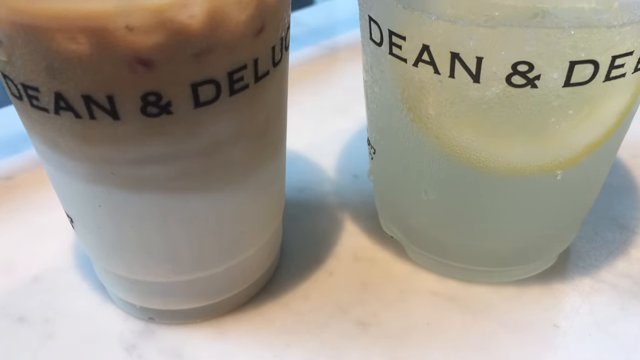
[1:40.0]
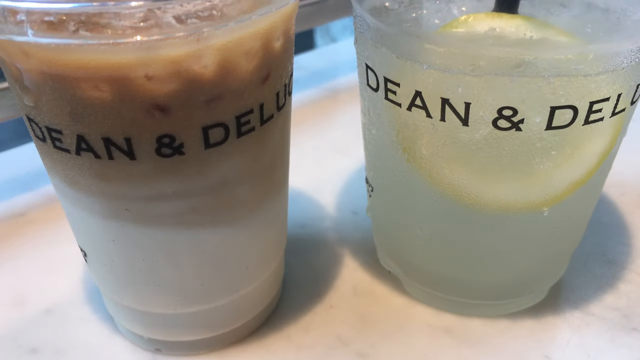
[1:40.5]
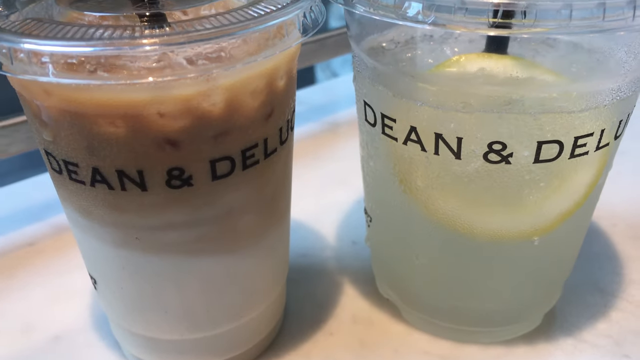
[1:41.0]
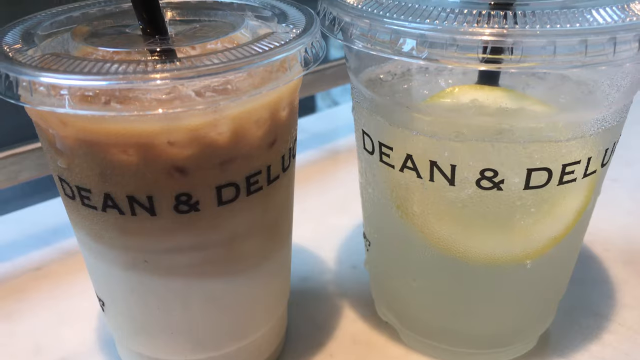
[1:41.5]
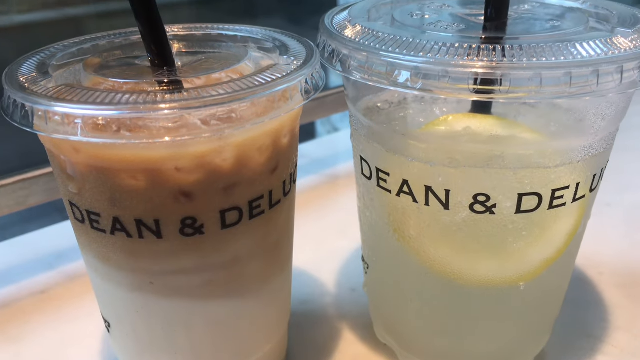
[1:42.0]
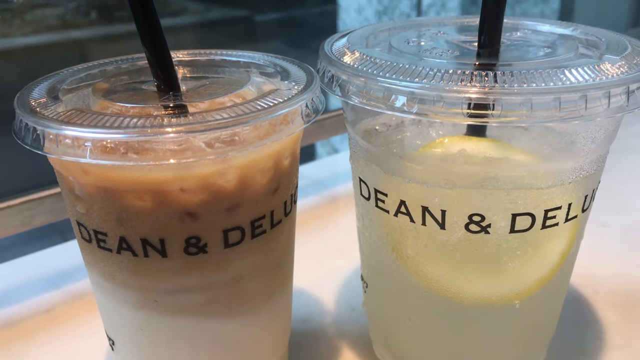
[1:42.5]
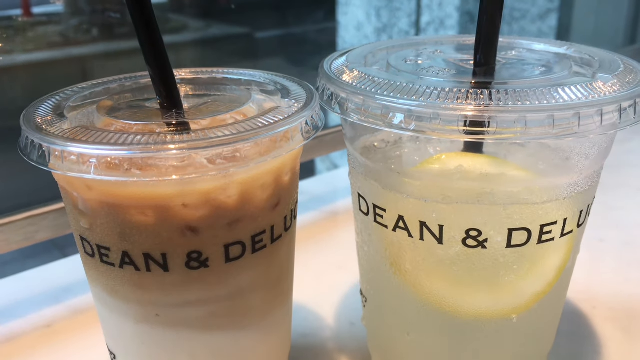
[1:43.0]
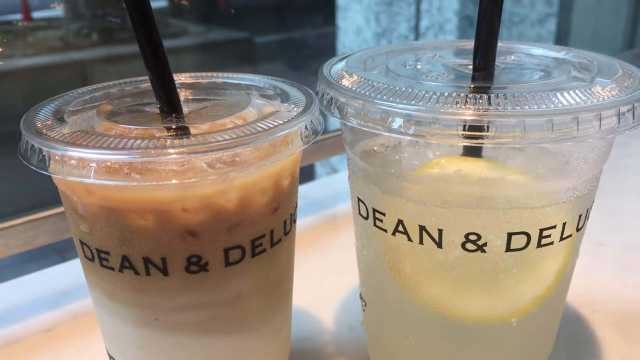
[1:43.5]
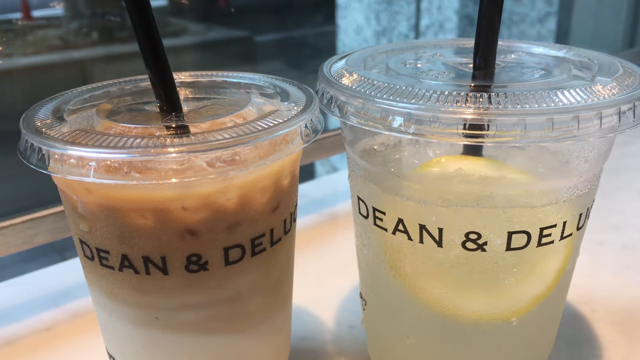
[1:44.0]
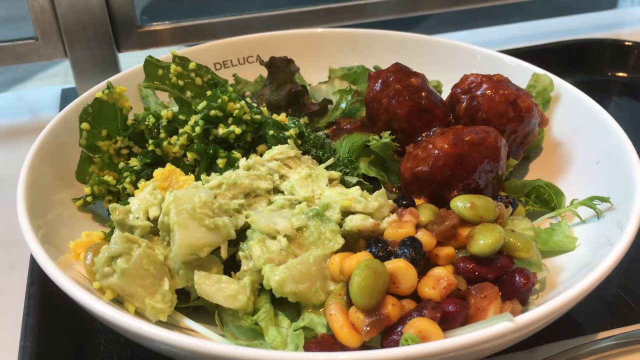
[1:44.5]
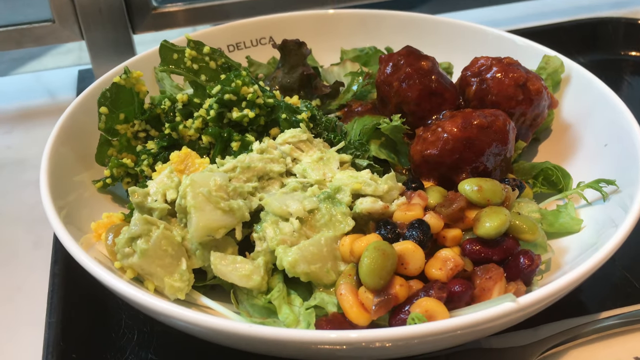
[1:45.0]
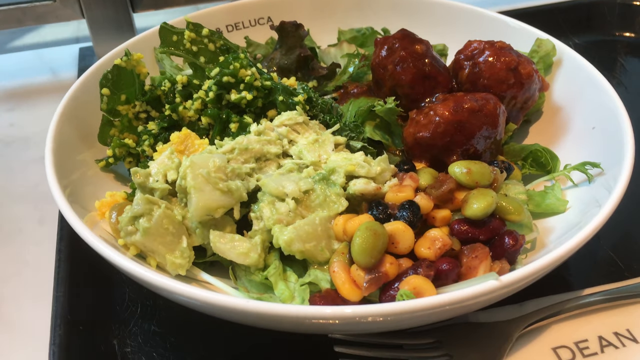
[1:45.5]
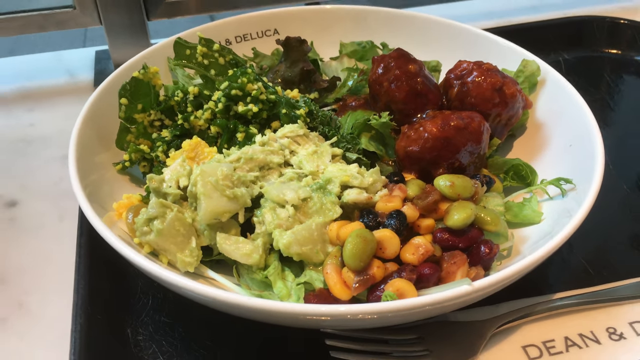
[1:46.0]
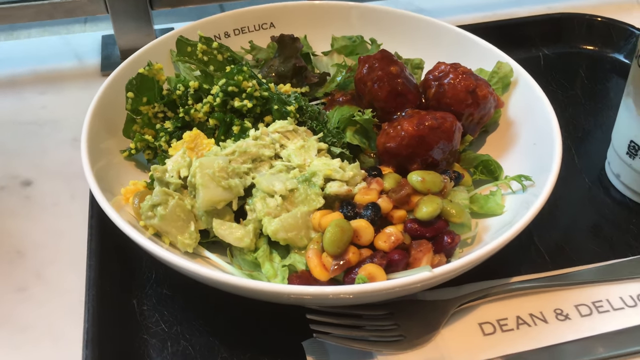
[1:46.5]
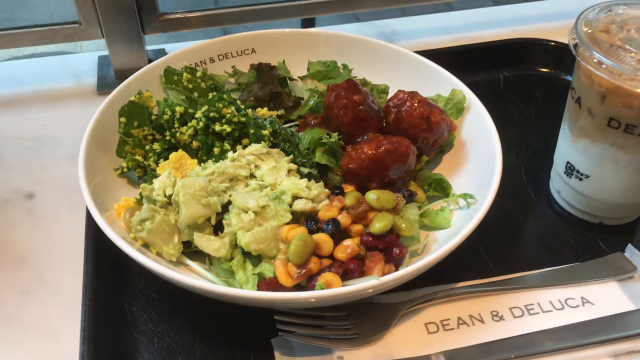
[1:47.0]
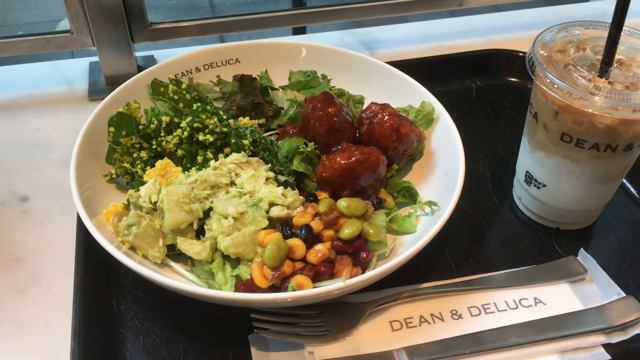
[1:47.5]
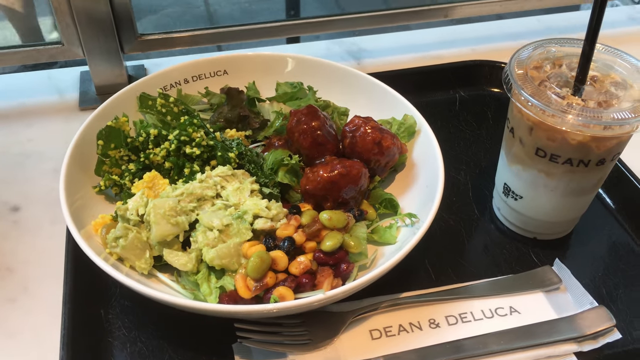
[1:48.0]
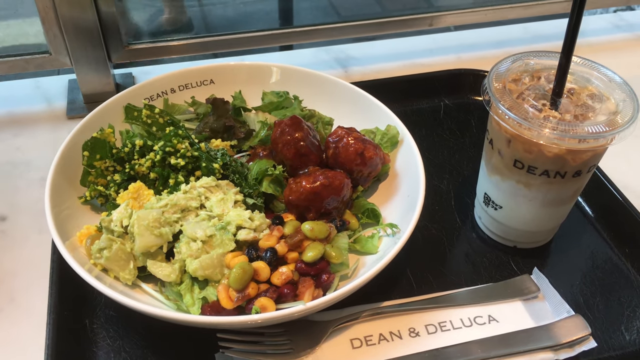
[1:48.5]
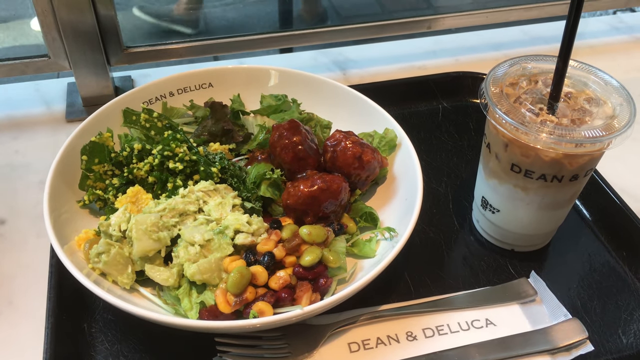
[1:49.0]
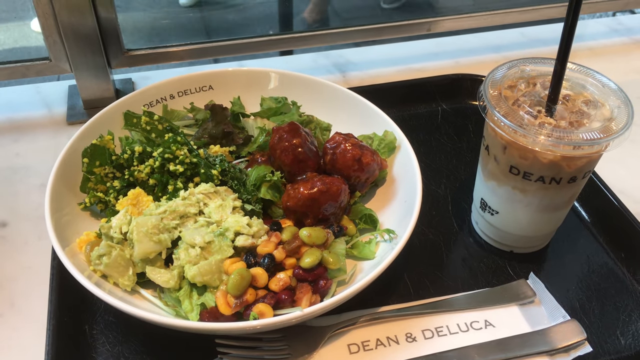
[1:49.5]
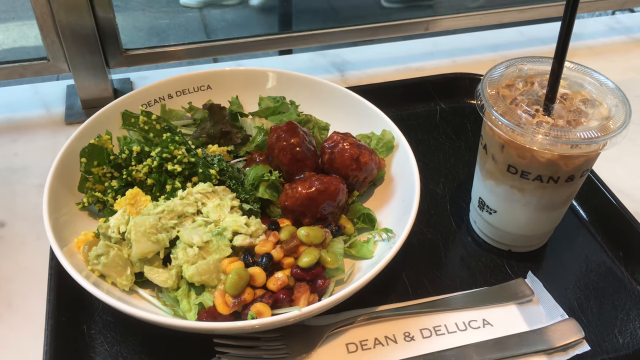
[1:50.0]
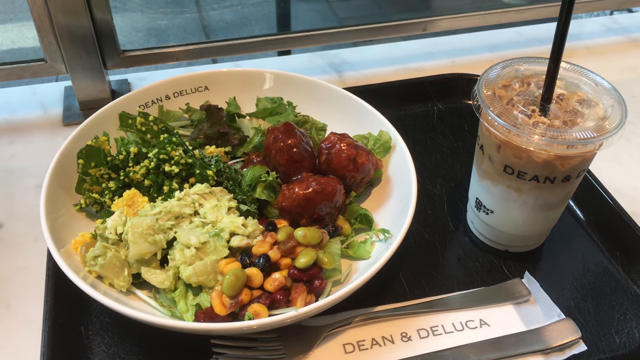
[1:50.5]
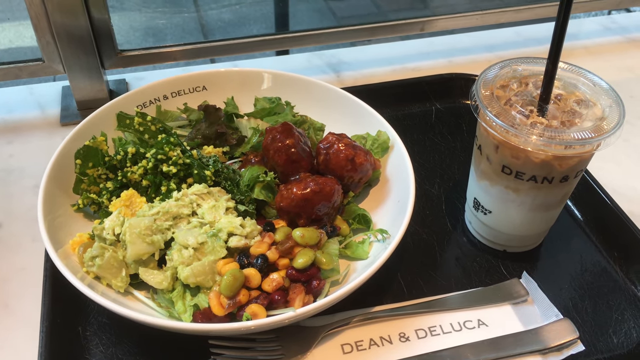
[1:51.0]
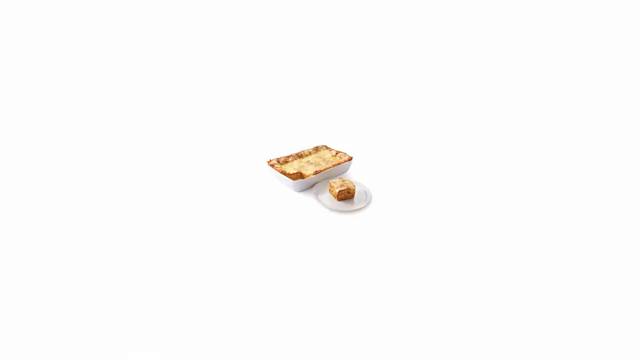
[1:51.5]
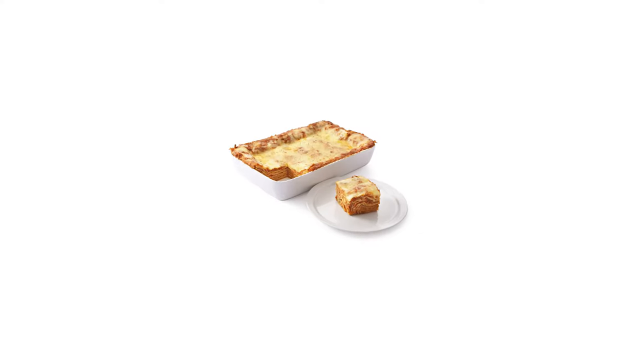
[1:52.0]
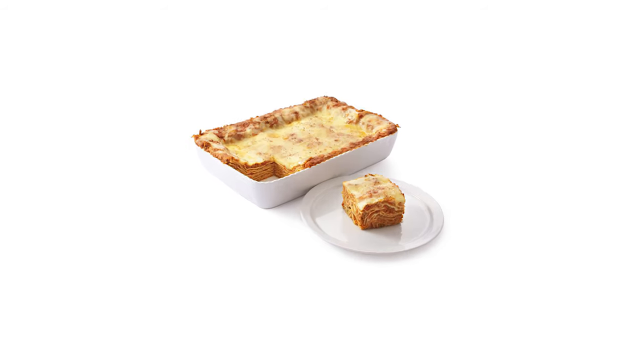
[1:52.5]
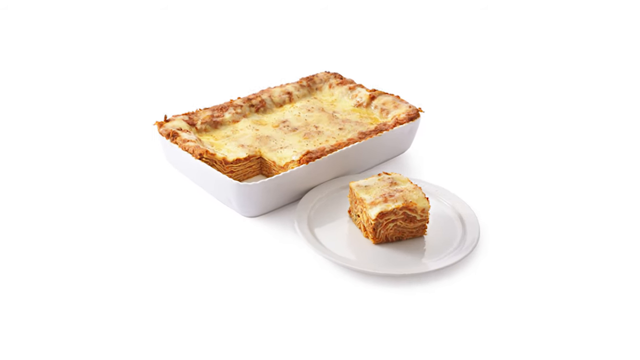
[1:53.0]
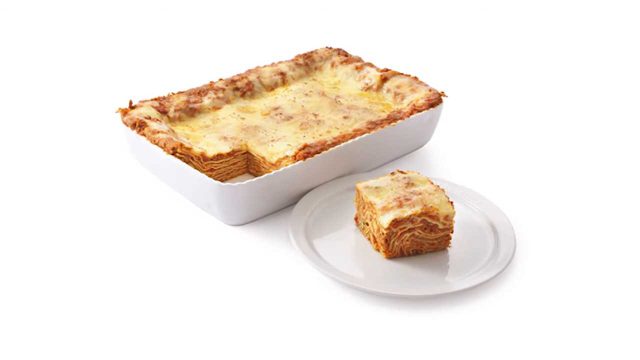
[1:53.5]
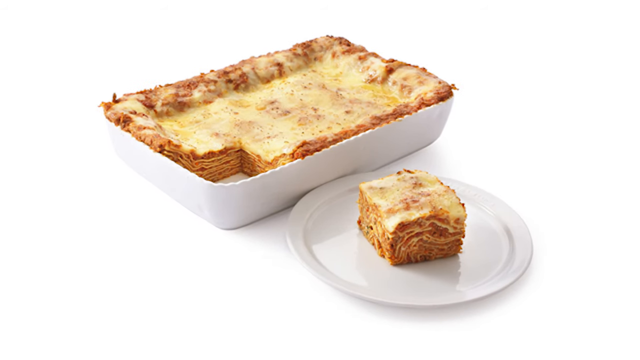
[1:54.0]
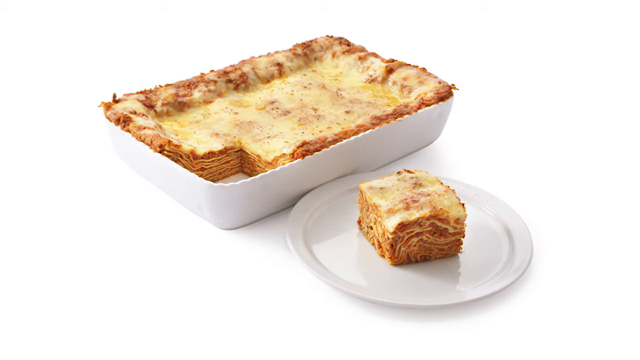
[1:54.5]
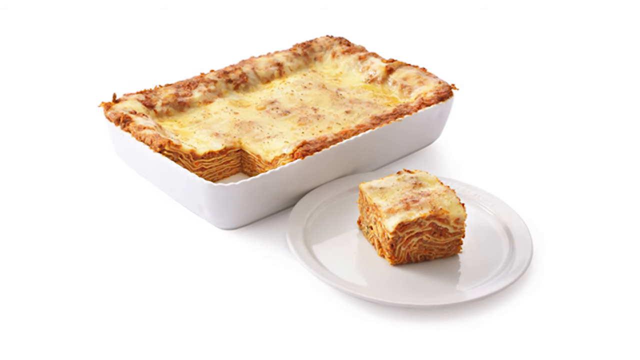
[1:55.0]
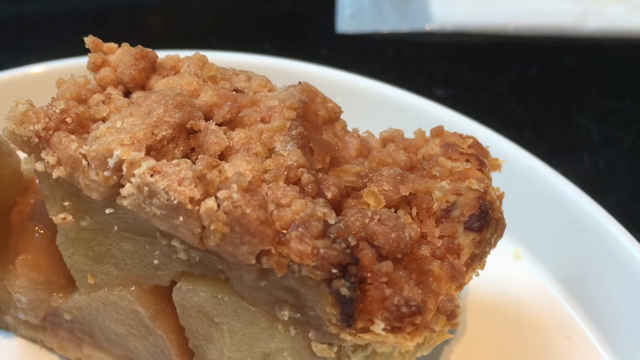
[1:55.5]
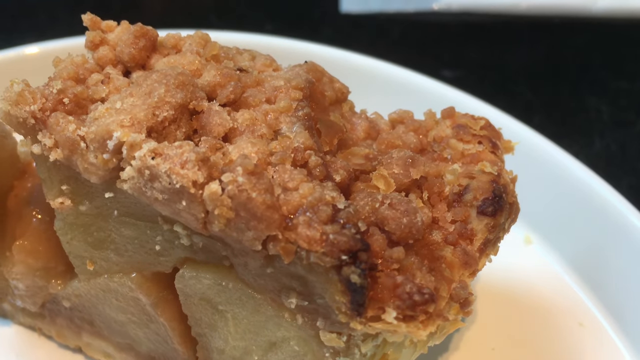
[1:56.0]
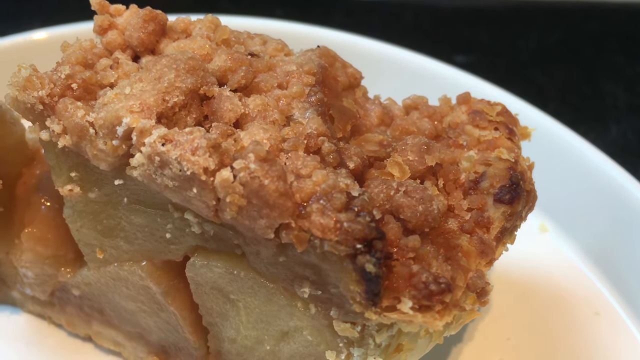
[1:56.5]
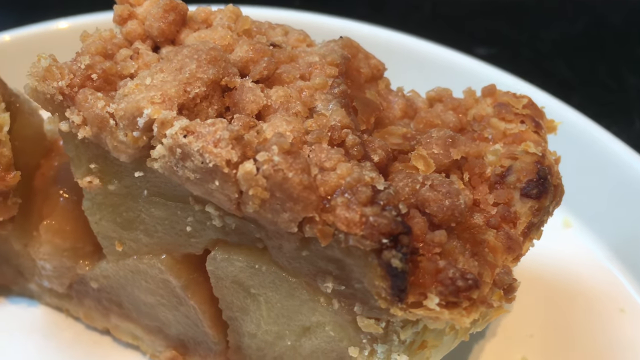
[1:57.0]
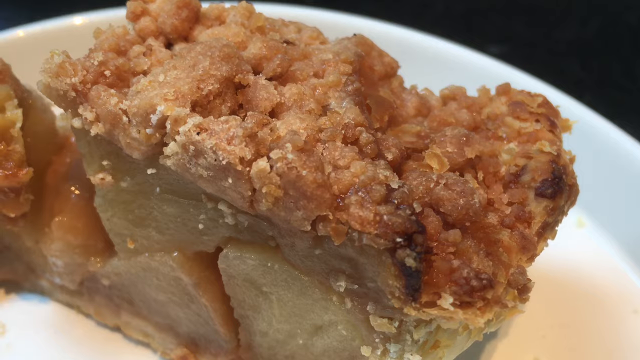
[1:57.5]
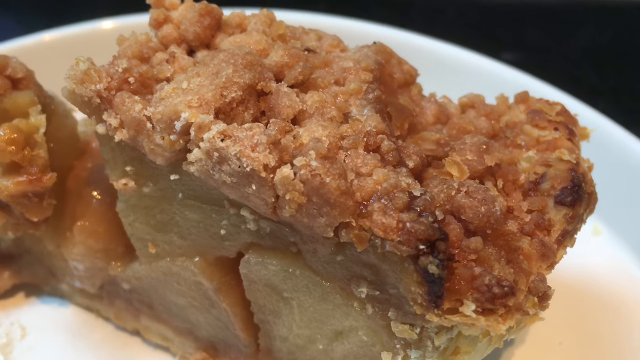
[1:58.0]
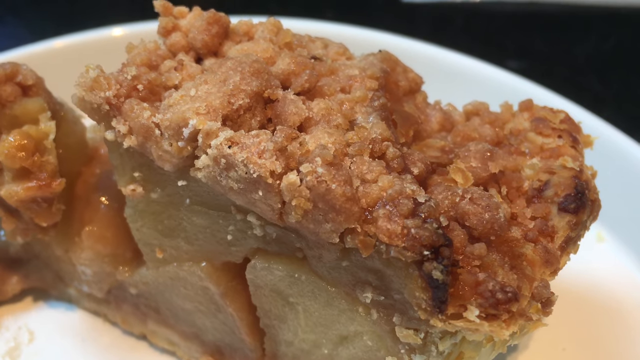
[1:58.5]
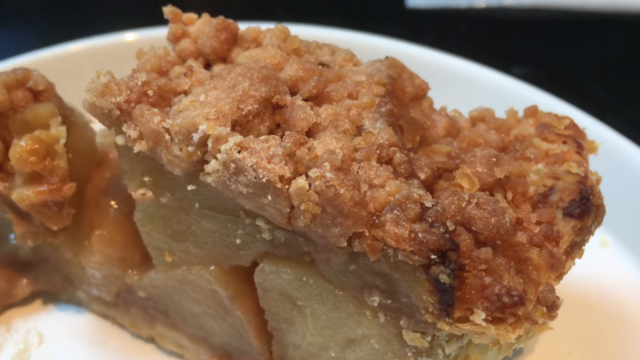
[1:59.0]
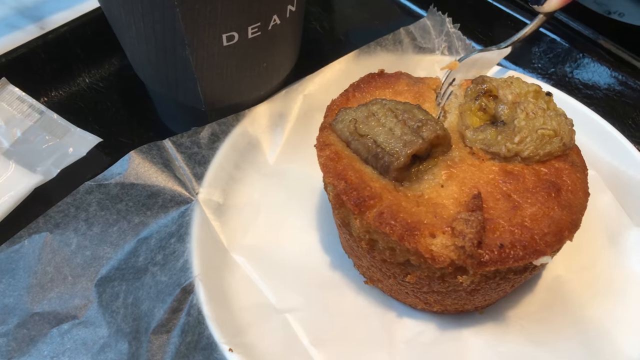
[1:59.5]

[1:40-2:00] The view continues panning up over Dean and DeLuca and its beverages, maybe shakes. A dish of what looks to be a salad with some eggs, lettuce and beans is shown along with a beverage. The view then zooms far in on a still image of what looks like lasagna on a white background. Another dish of food follows. Briefly, a muffin appears as someone cuts into it with a silver fork; the muffin is on top of a wrapper on a plate and has two big pieces of sausage on top.